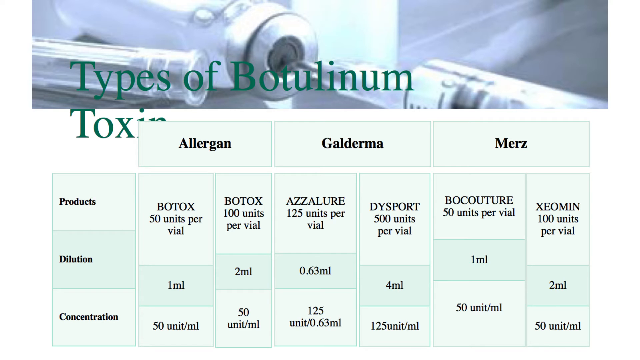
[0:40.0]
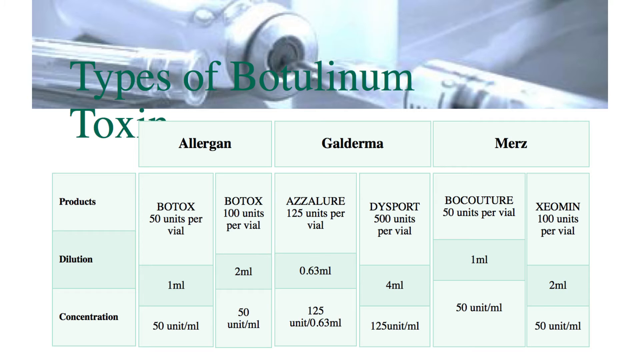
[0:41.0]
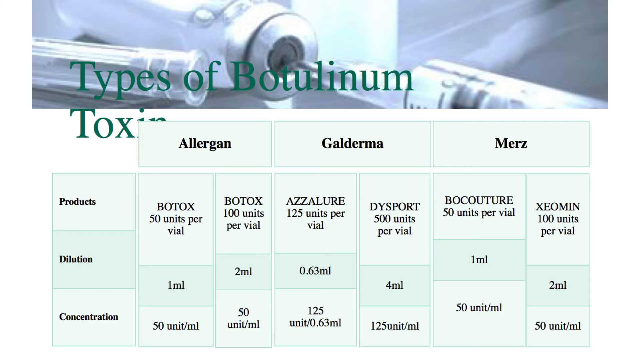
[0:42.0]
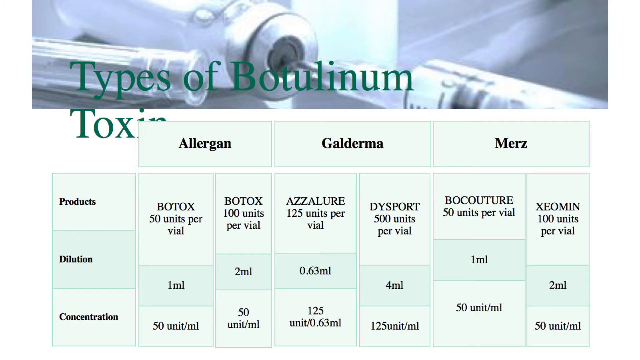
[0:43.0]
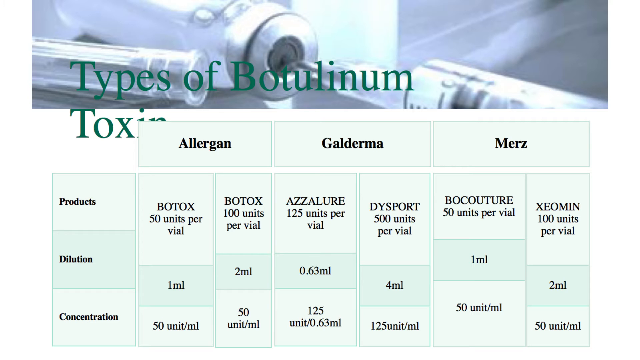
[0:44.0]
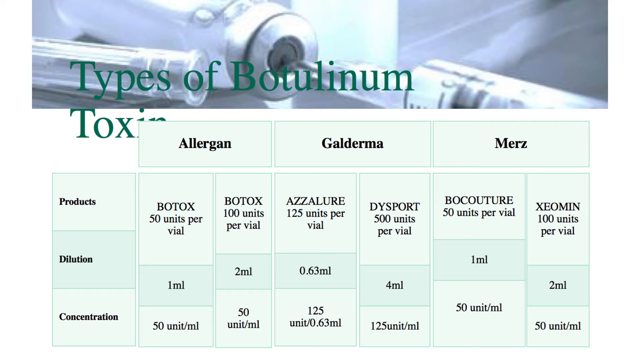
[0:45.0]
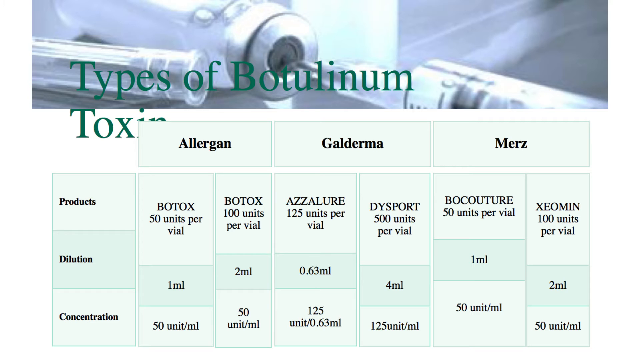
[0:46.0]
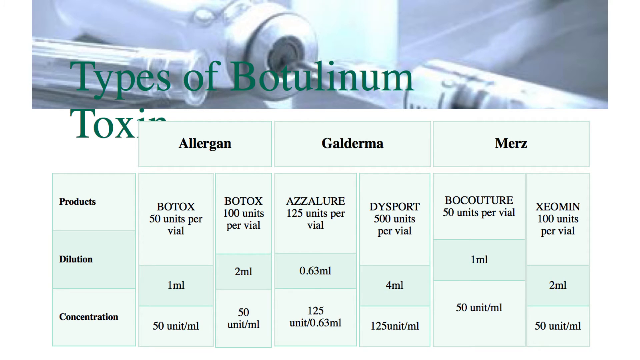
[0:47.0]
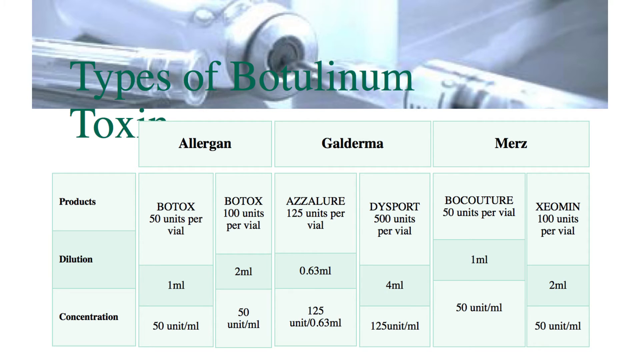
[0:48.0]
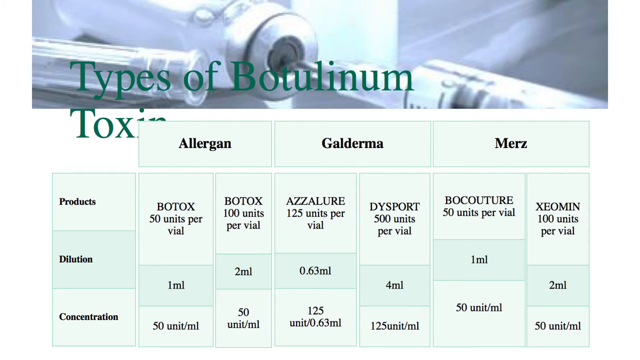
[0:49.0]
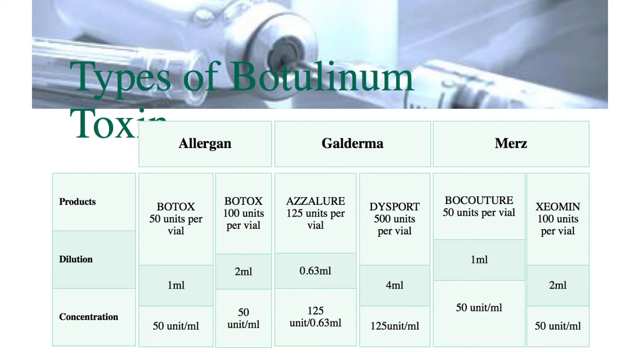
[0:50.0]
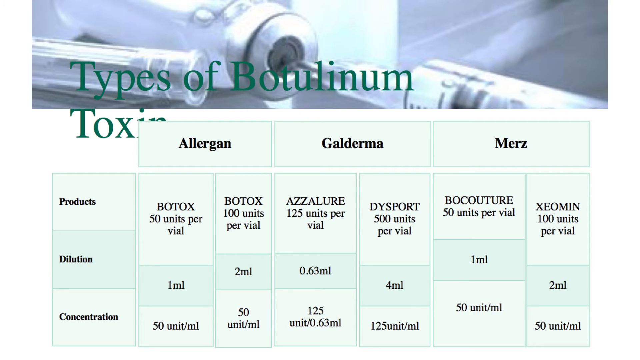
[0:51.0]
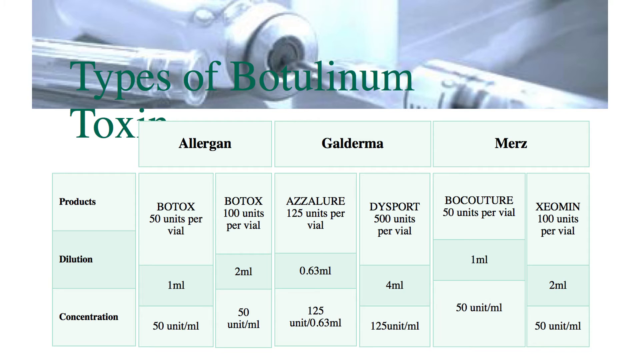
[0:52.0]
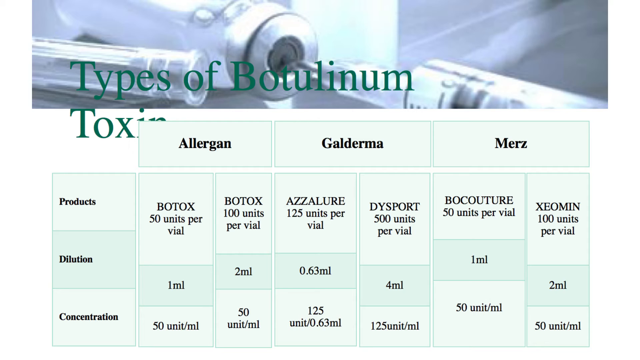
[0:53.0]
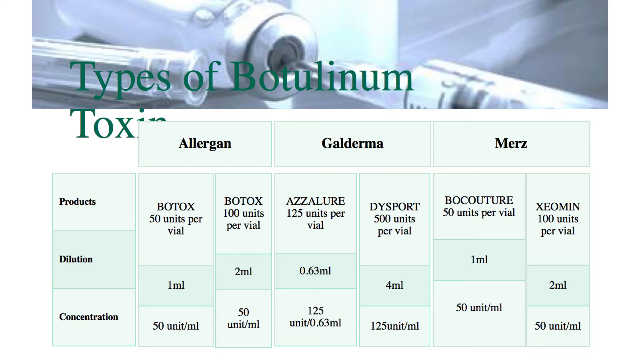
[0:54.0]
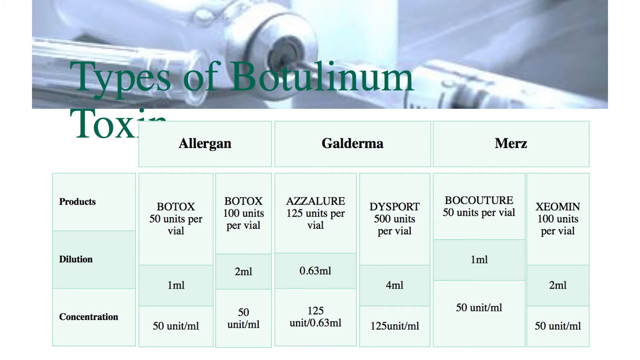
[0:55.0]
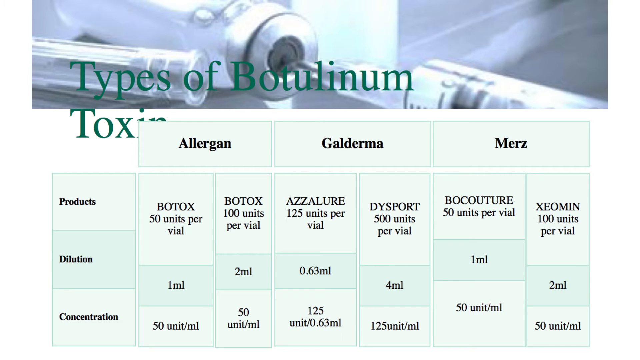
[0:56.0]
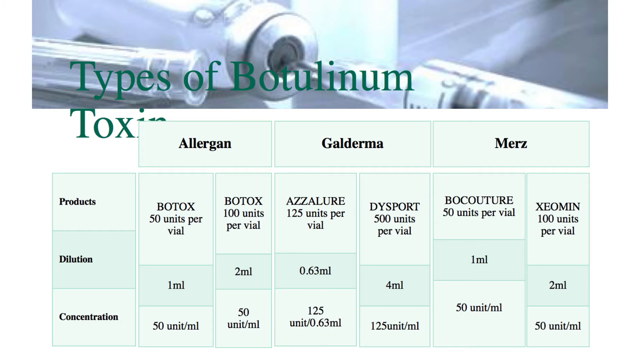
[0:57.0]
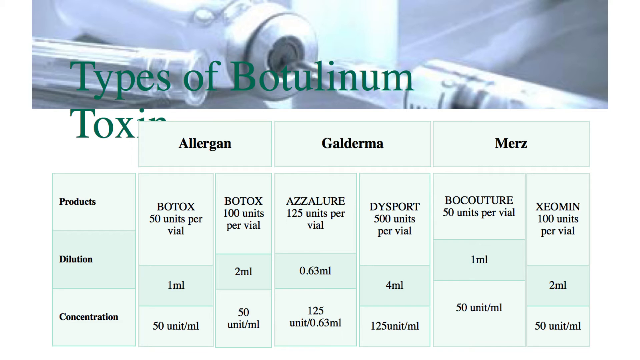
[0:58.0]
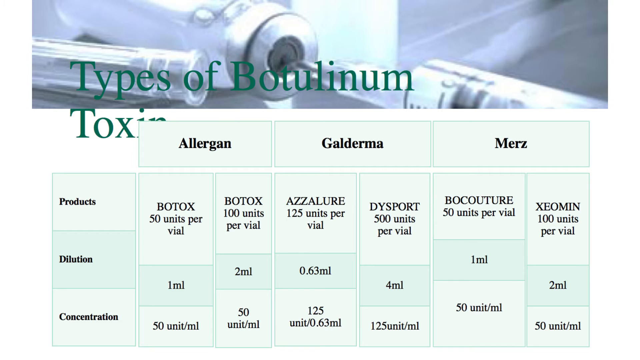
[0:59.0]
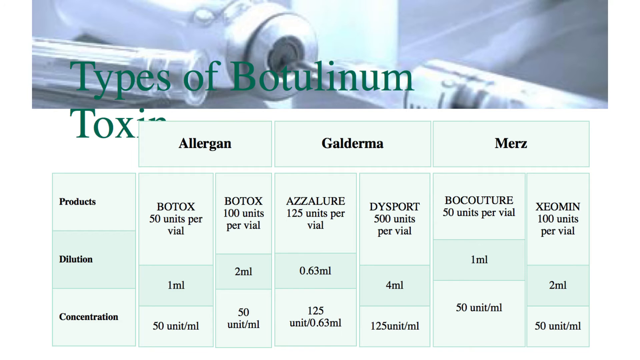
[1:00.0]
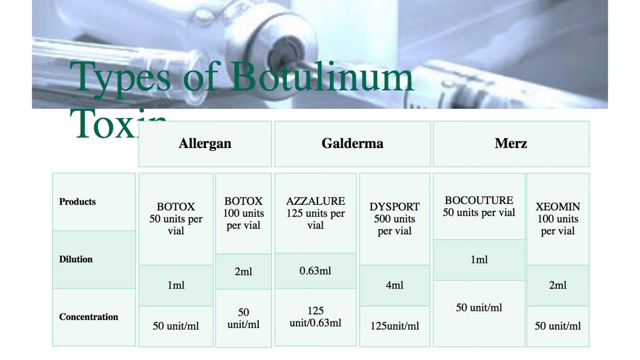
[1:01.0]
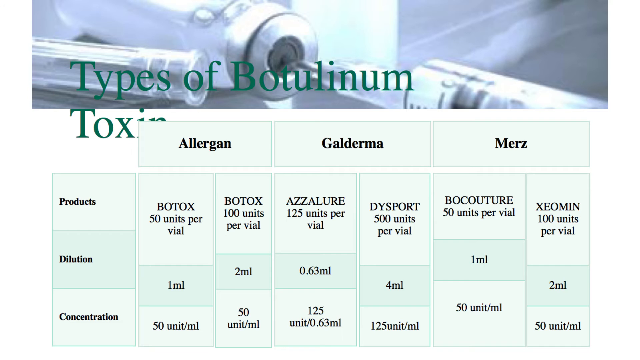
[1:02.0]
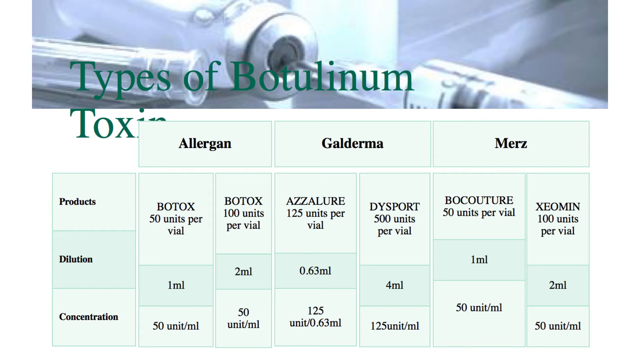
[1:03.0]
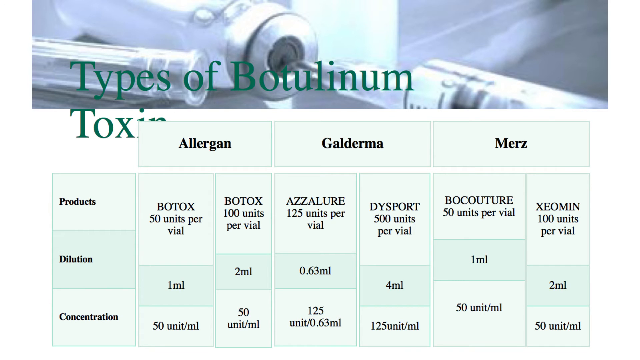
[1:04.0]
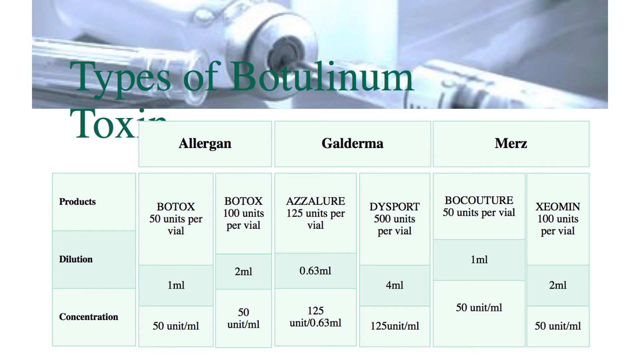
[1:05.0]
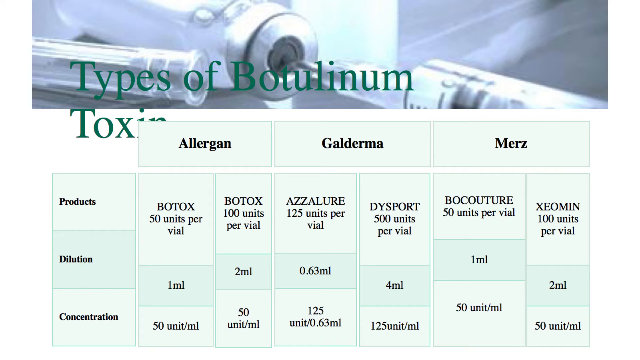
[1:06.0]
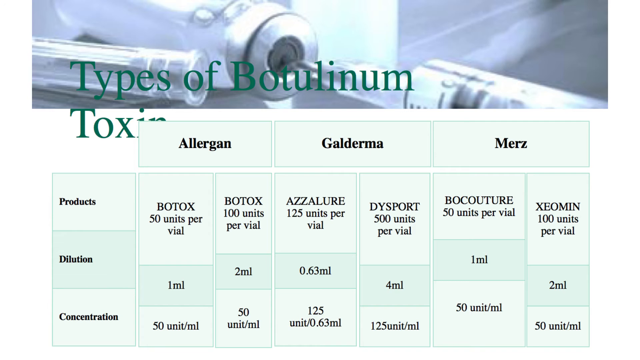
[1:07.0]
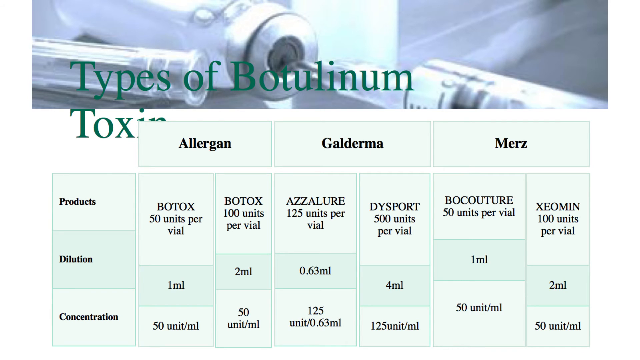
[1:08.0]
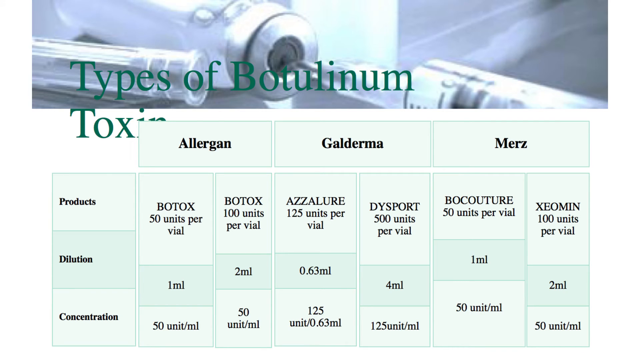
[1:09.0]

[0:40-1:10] A chart lists the types of botulinum toxins, with three labels across the top, Allergan, Galderma and Merz, and three labels down the left side, Products, Dilution and Concentration. In the Products row, the cells under Allergan read "Botox 50 units per vial" and "Botox 100 units per vial"; under Galderma, "Azzalure 125 units per vial" and "Dysport 500 units per vial"; and under Merz, "Bocouture 50 units per vial" and "Xeomin 100 units per vial." In the Dilution row, the two cells under Allergan say "1 milliliter" and "2 milliliters," under Galderma "0.63 milliliters" and "4 milliliters," and under Merz "1 milliliter" and "2 milliliter." In the Concentration row, both cells under Allergan say "50 unit per milliliter"; under Galderma, the cells say "125 unit per 0.63 milliliters" and "125 units per milliliter"; and both cells under Merz say "50 unit per milliliters."